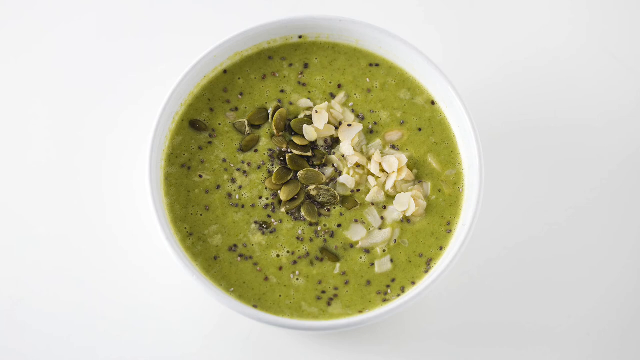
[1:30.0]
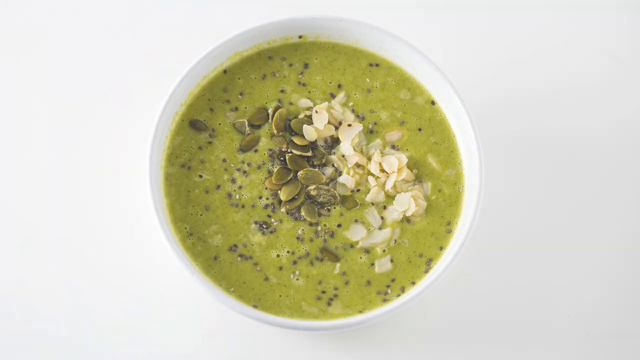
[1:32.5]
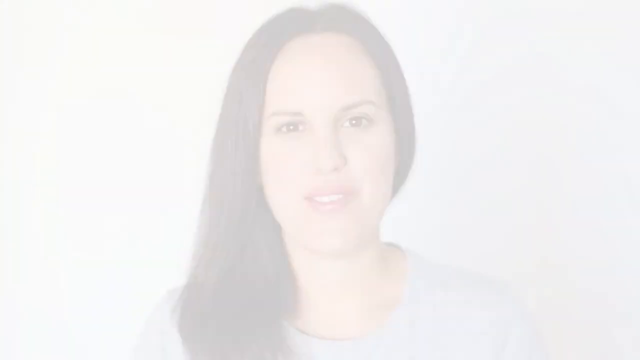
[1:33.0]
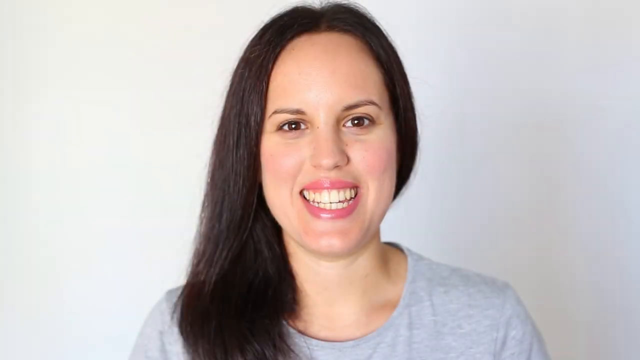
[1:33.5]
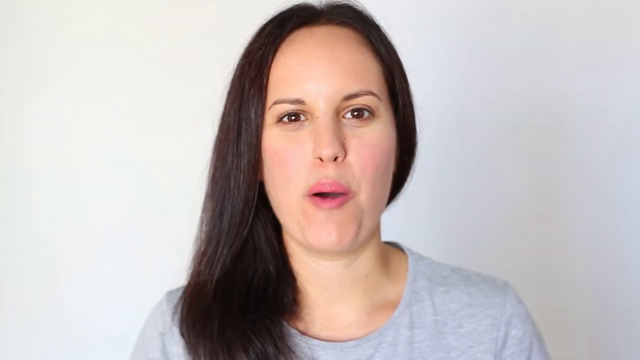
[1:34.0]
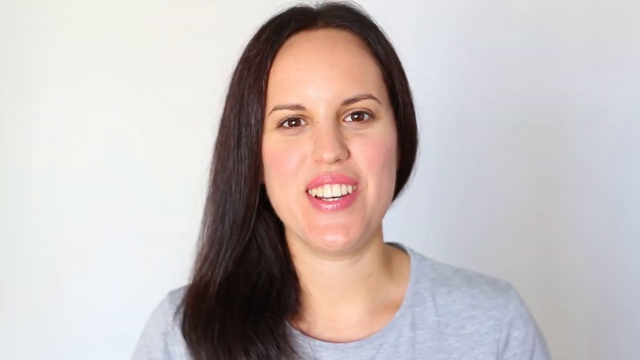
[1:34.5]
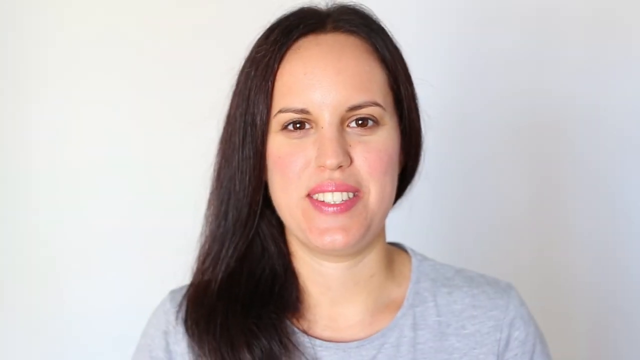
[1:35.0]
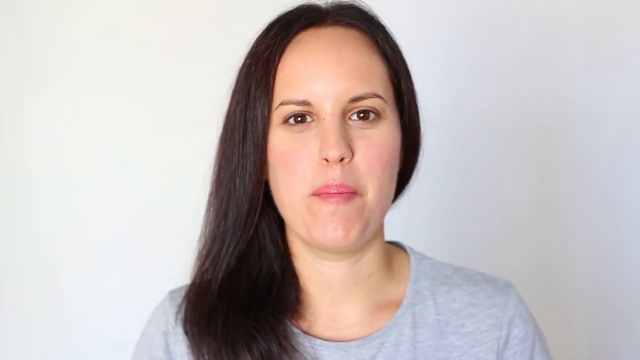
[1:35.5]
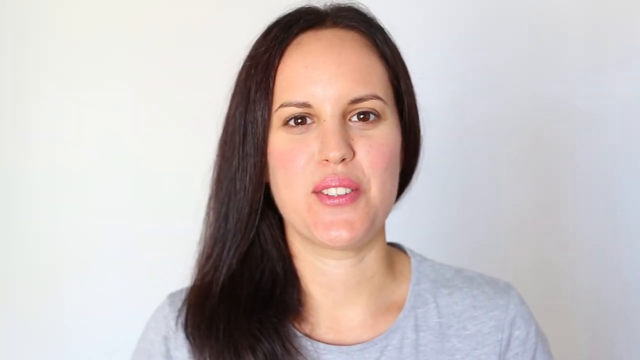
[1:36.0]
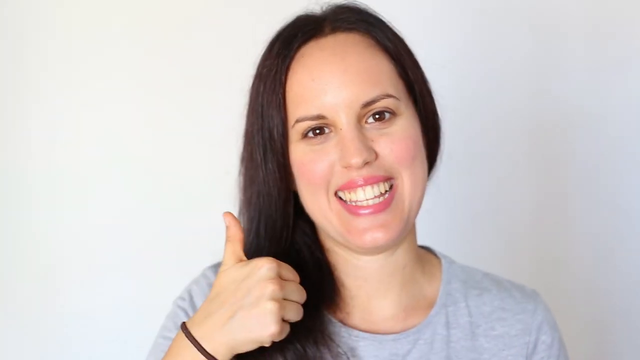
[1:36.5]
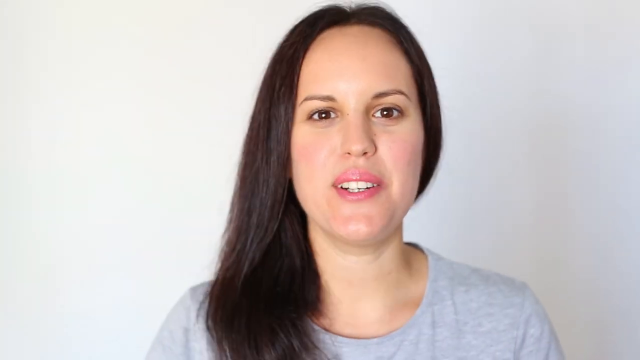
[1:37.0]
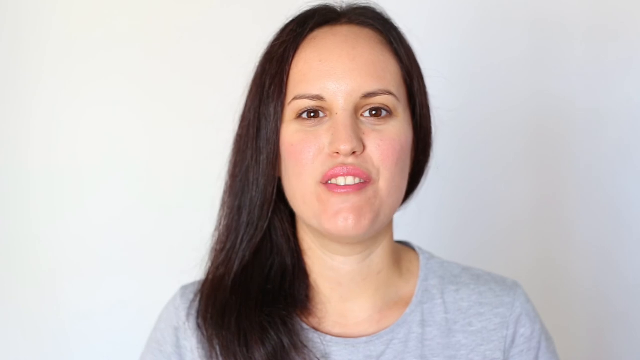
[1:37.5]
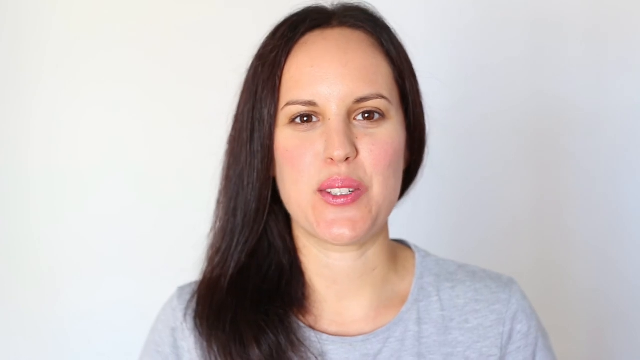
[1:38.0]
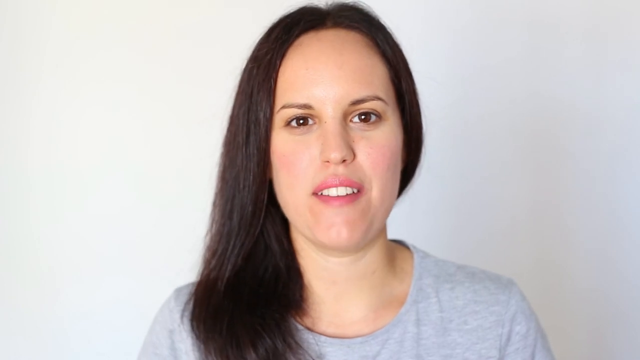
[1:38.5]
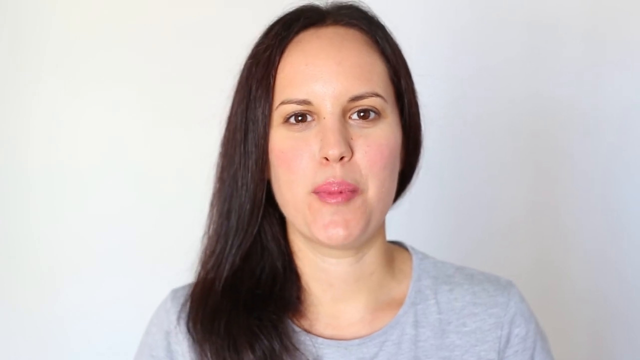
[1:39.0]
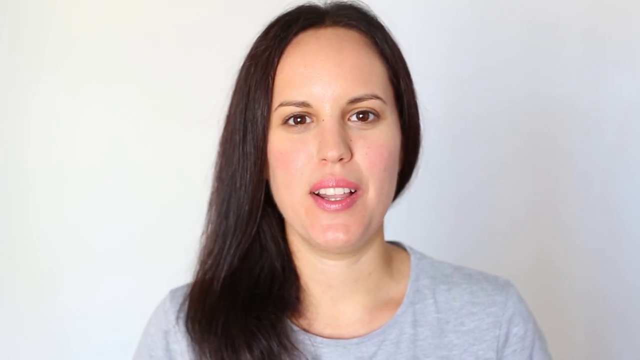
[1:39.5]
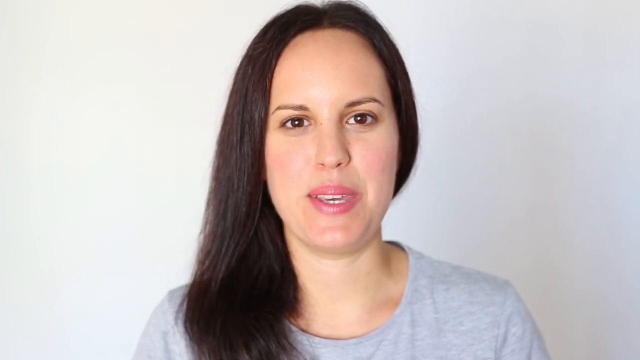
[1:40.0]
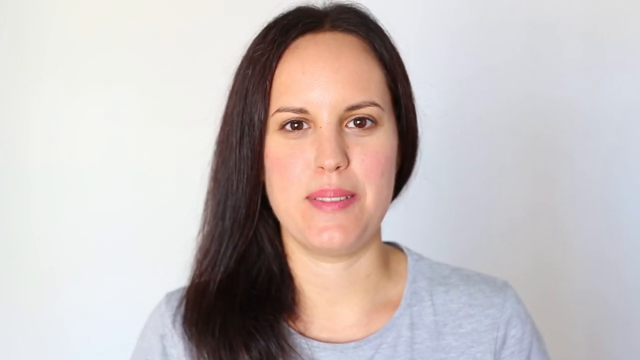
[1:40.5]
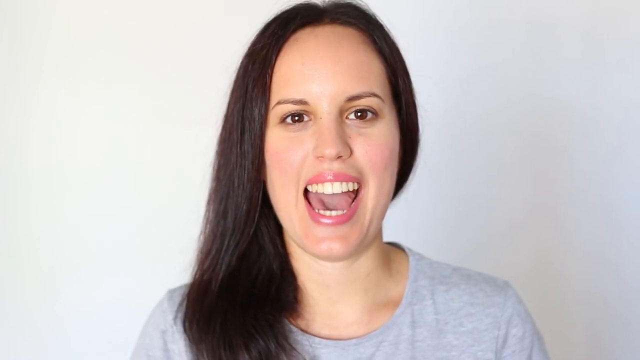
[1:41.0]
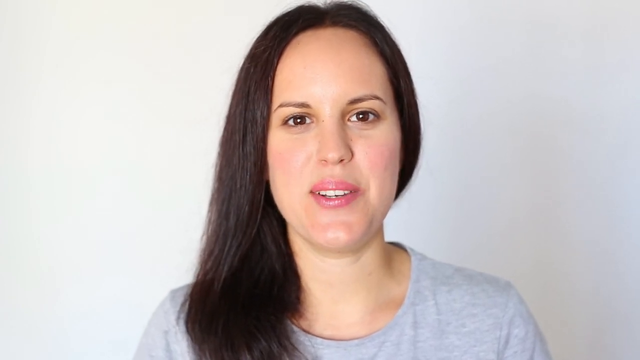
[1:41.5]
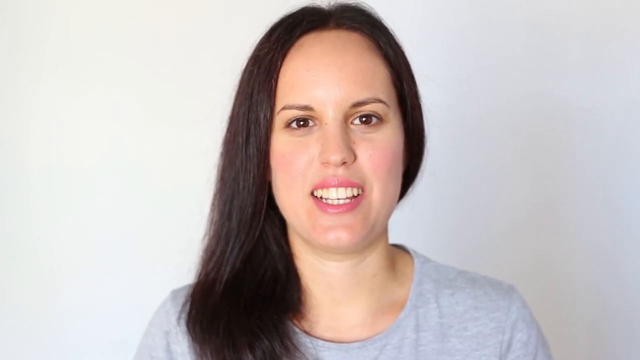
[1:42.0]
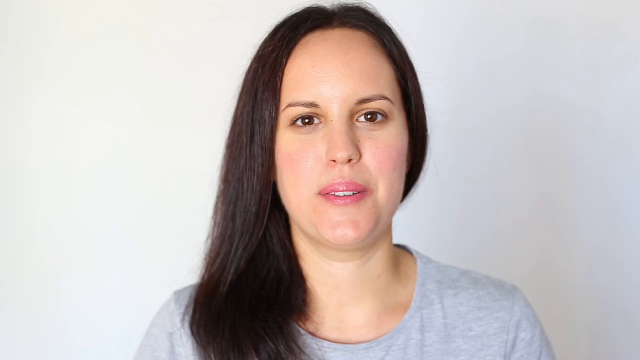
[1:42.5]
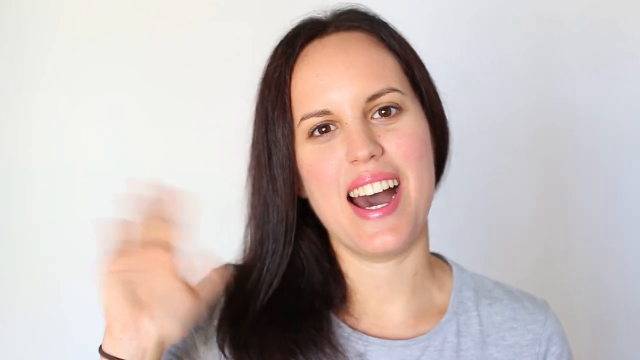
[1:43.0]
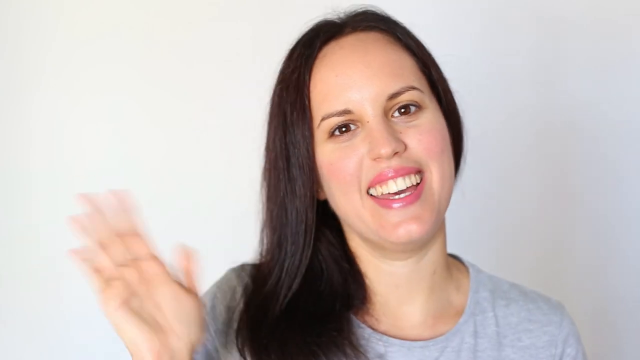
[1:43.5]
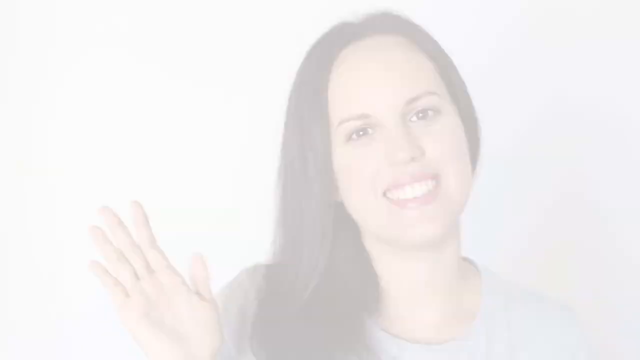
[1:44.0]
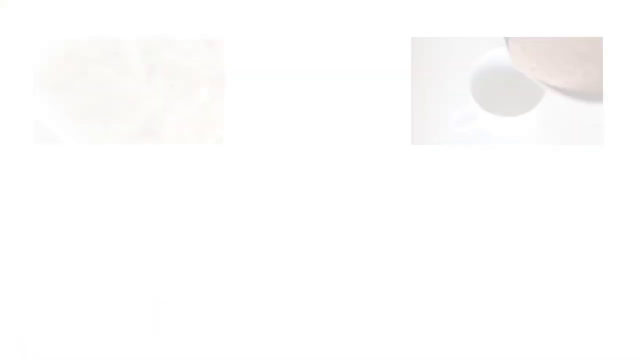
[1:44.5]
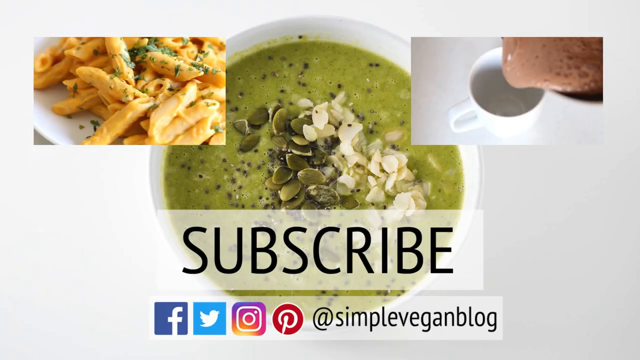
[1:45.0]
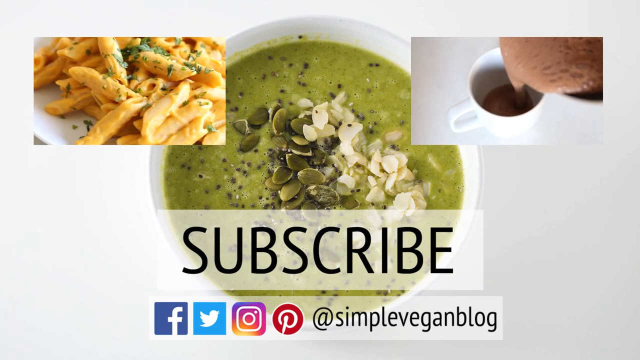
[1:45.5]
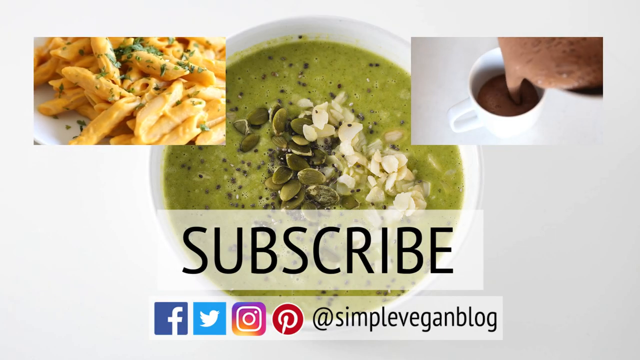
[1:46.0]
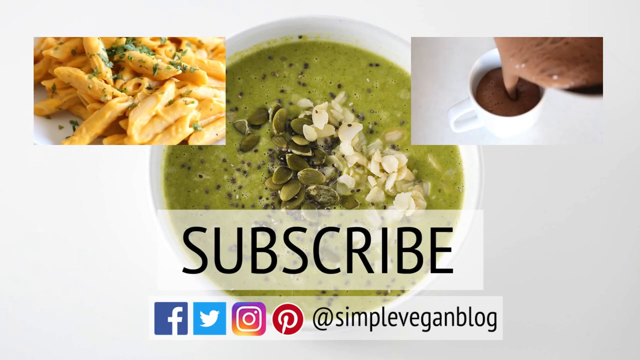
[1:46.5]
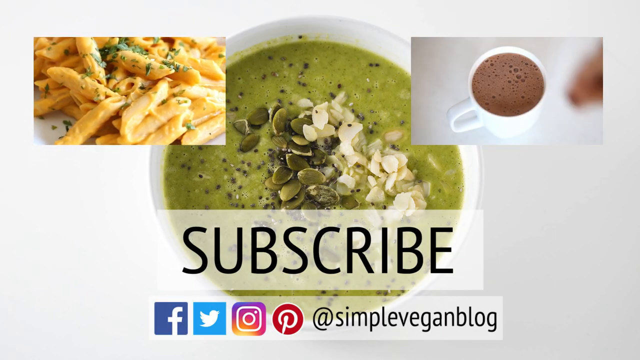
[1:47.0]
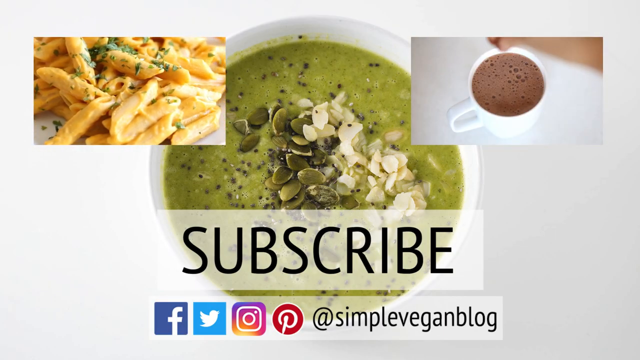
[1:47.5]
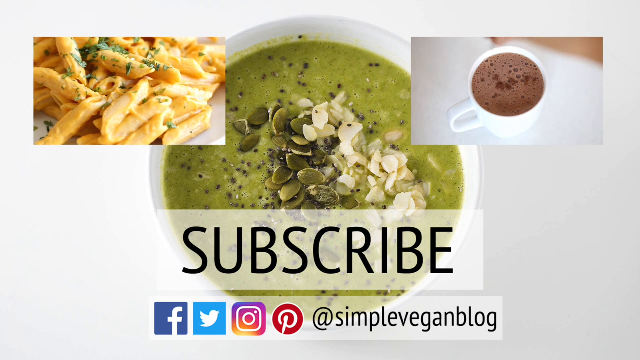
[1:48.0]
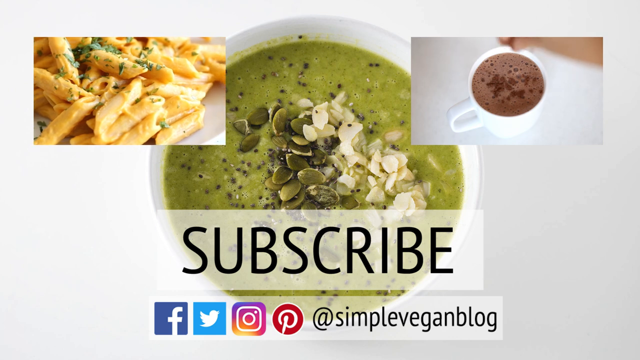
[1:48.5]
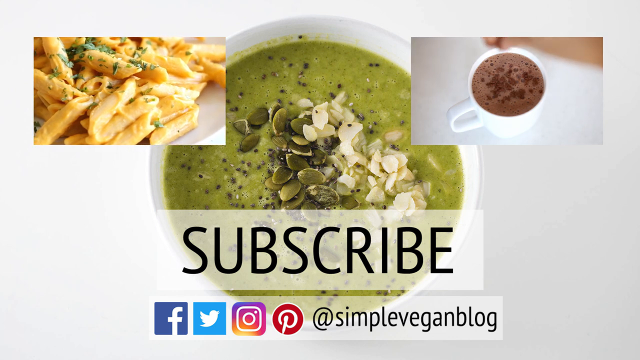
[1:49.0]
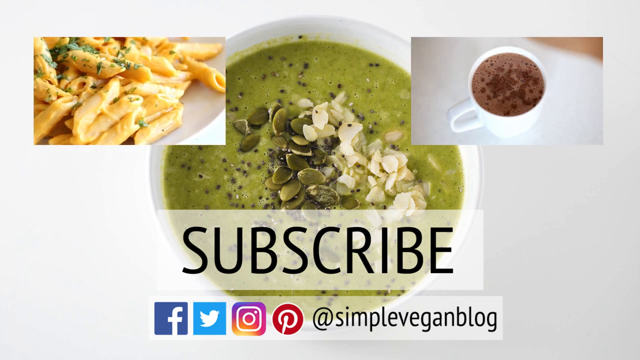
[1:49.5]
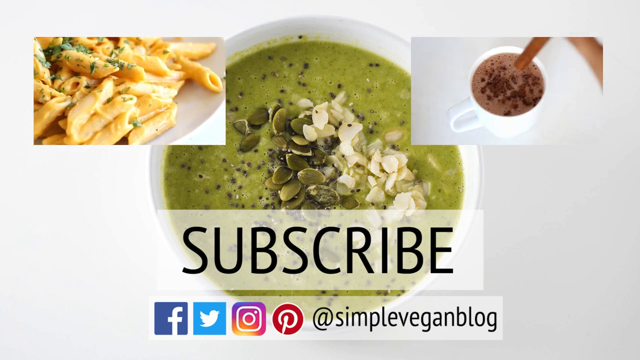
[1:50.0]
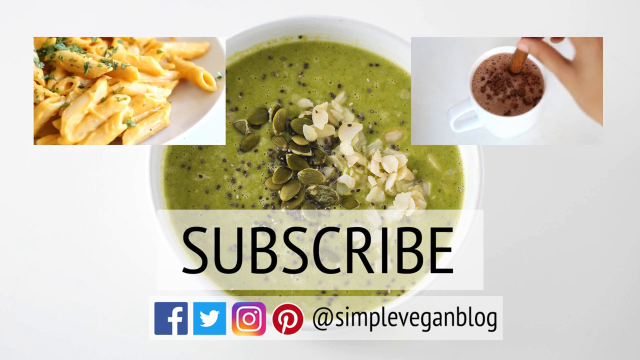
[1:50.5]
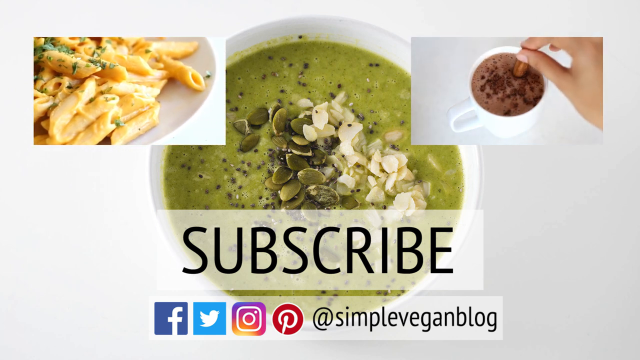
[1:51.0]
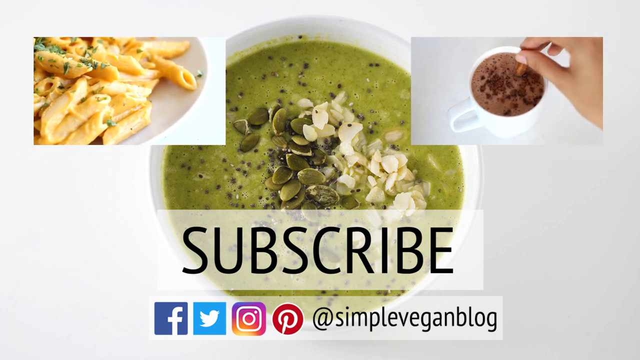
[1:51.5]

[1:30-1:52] The camera remains fixed on the bowl of green soup, then moves back to the woman. She is smiling and looks very happy as she talks to her audience. She raises her right hand and gives a thumbs up, then lowers her hand while continuing to speak, and starts to wave goodbye. A white screen appears, and the bowl of green soup appears with the word "subscribed" written in black underneath it. In the top left corner is what appears to be Italian penne, and in the top right corner is a mug with what looks like chocolate being poured into it. Below are the pages she is on: Facebook, Twitter, Instagram and Pinterest, followed by SimplyVeganBlog.